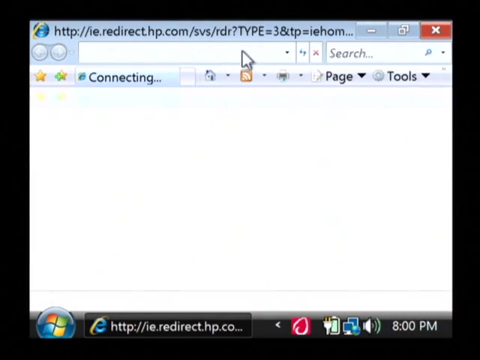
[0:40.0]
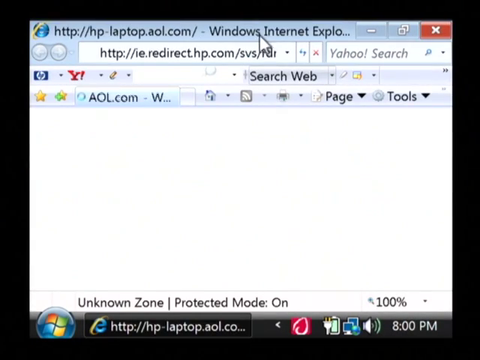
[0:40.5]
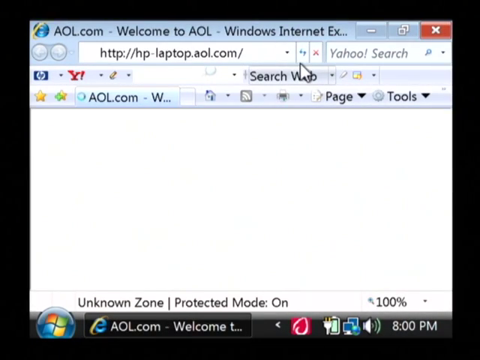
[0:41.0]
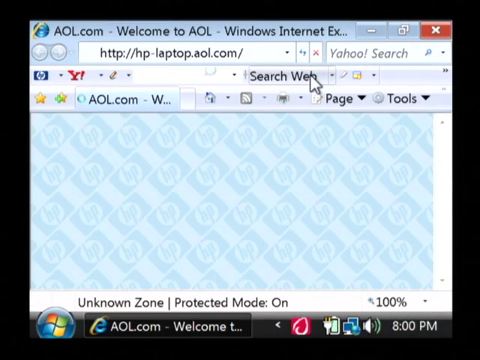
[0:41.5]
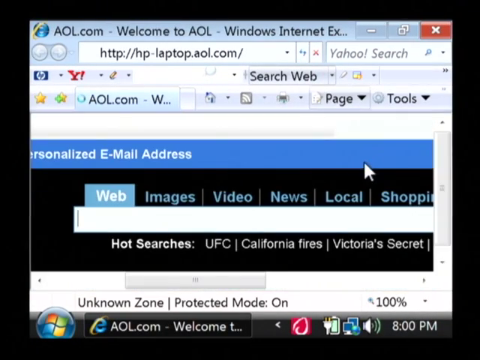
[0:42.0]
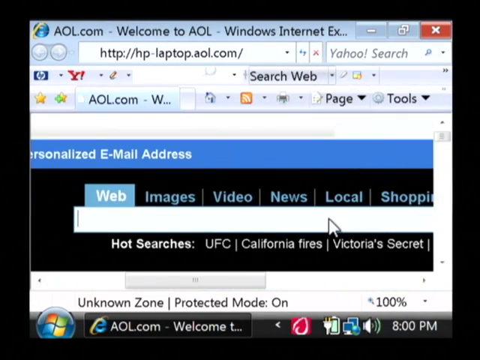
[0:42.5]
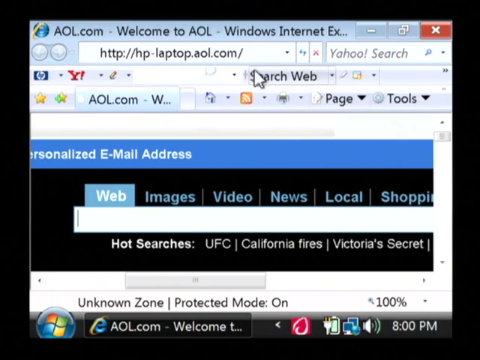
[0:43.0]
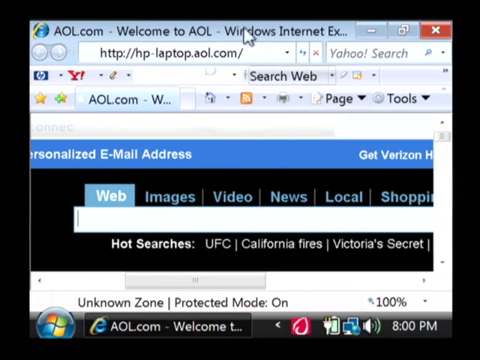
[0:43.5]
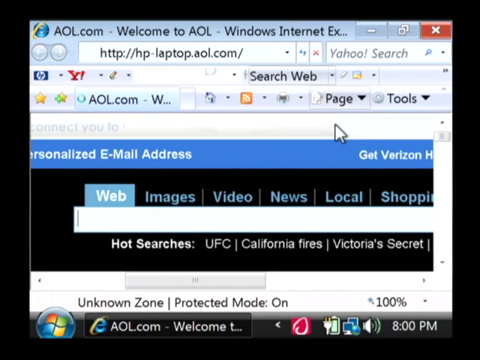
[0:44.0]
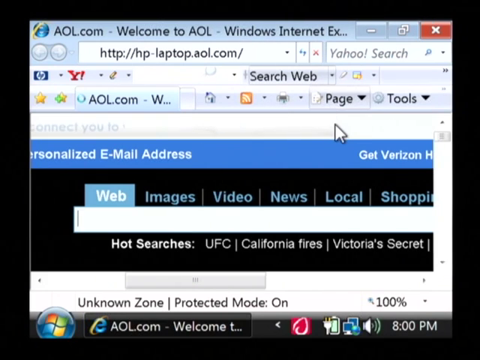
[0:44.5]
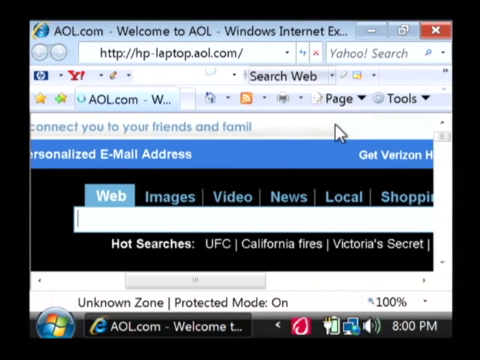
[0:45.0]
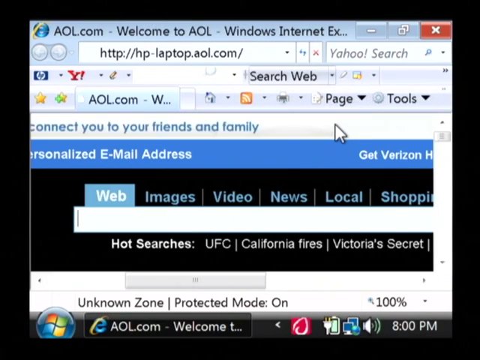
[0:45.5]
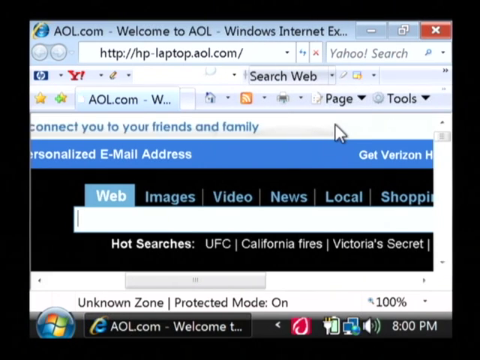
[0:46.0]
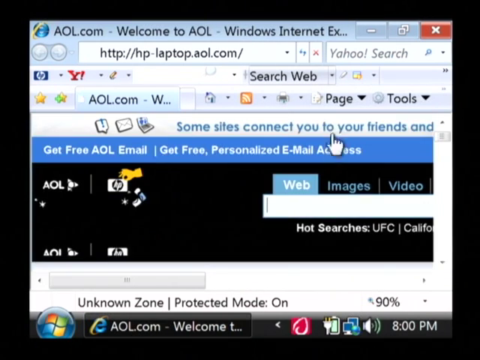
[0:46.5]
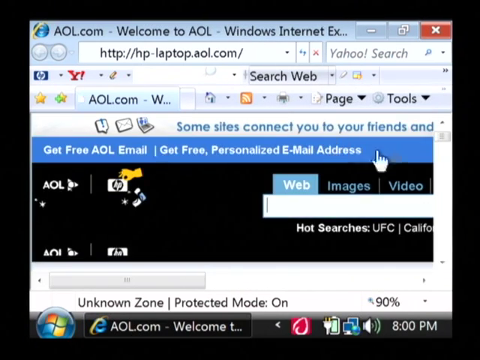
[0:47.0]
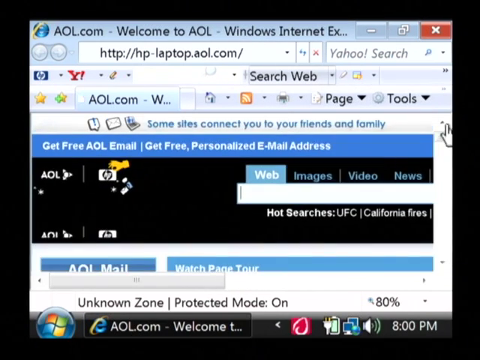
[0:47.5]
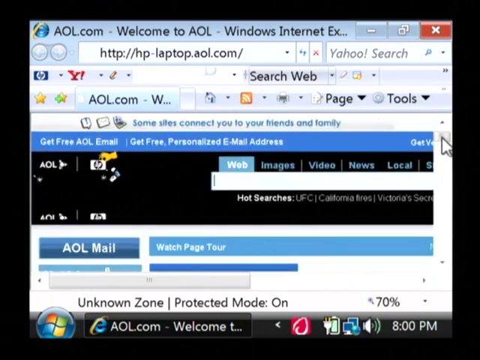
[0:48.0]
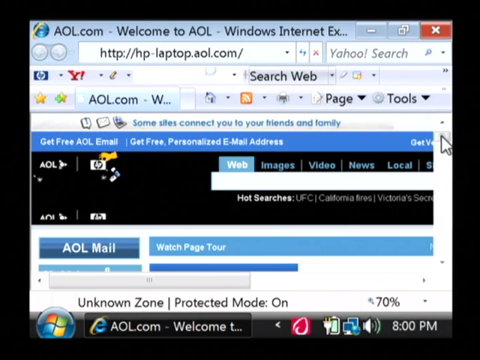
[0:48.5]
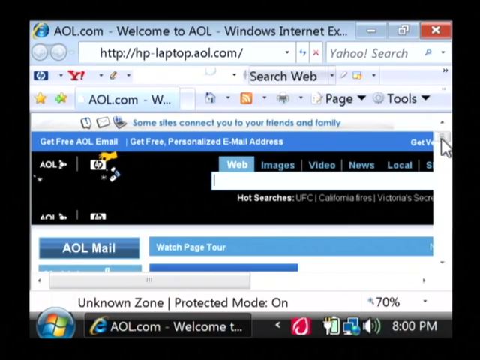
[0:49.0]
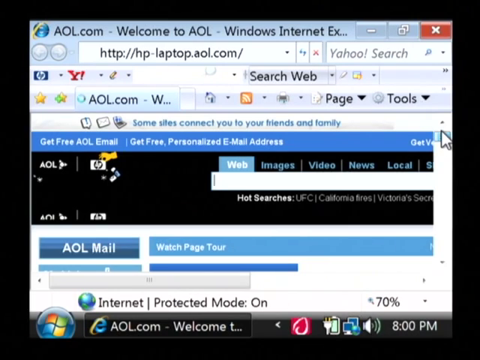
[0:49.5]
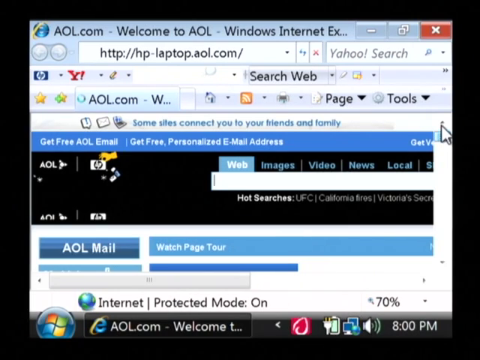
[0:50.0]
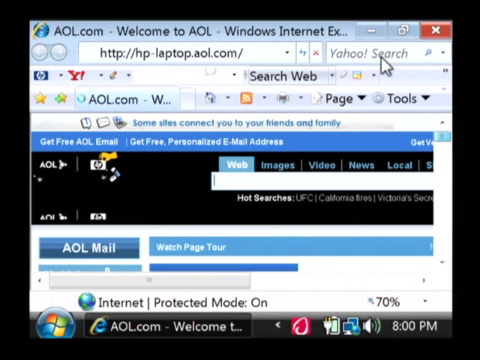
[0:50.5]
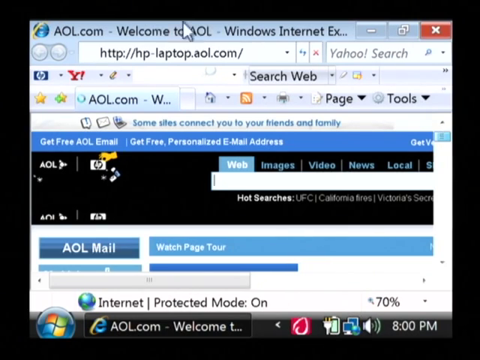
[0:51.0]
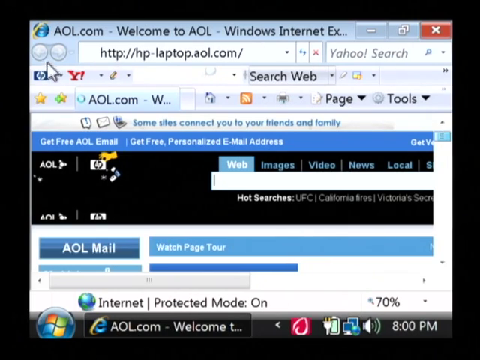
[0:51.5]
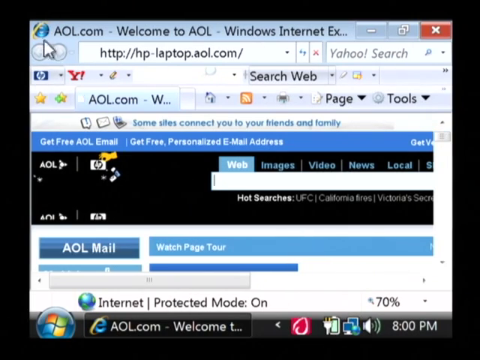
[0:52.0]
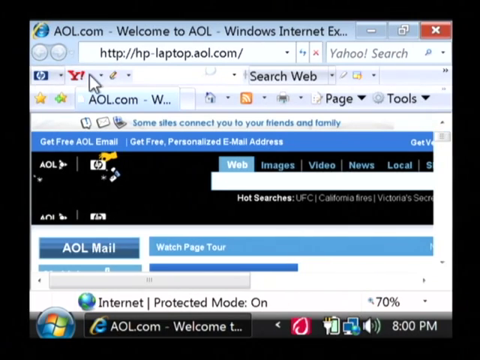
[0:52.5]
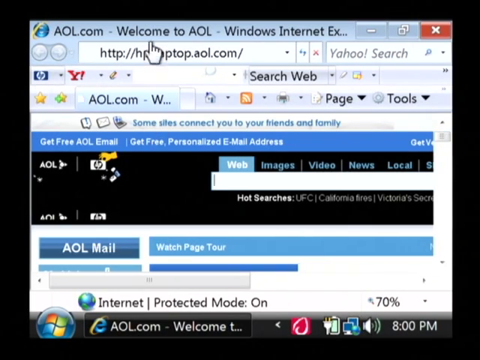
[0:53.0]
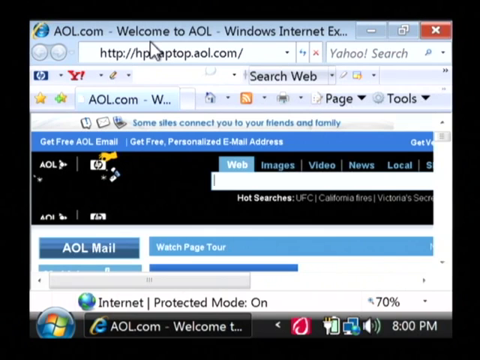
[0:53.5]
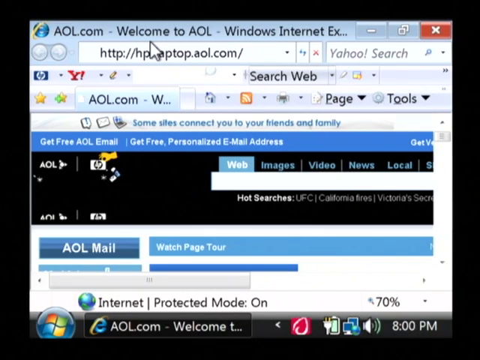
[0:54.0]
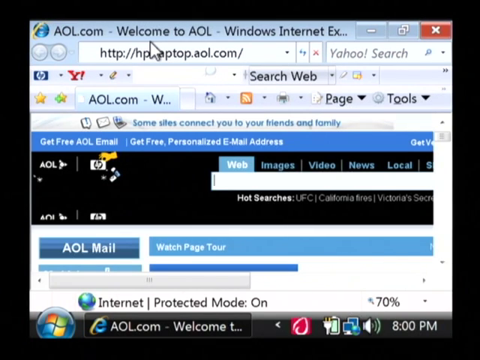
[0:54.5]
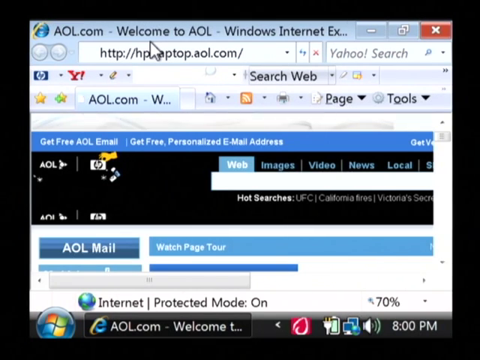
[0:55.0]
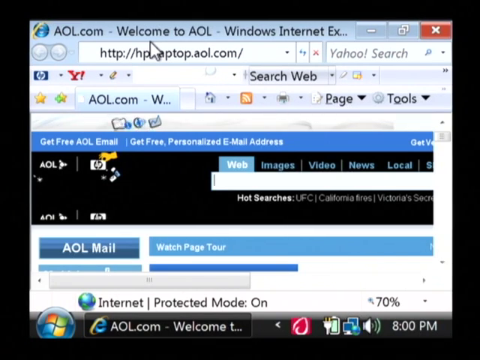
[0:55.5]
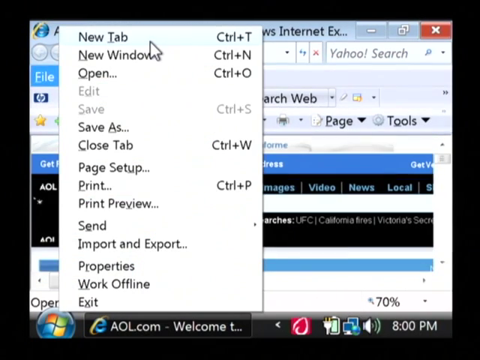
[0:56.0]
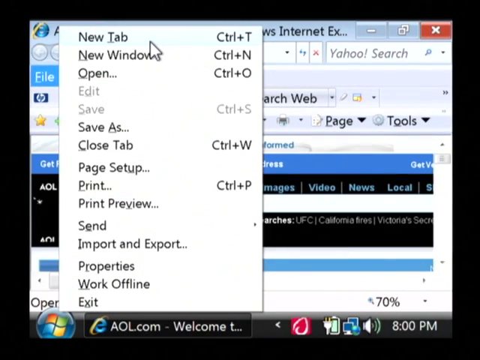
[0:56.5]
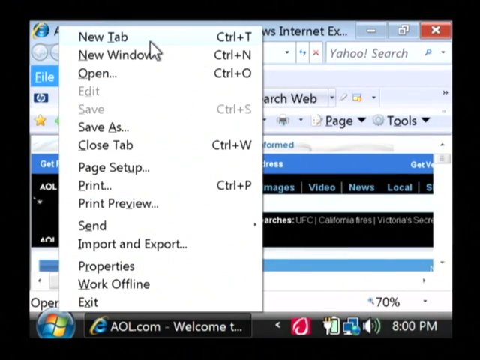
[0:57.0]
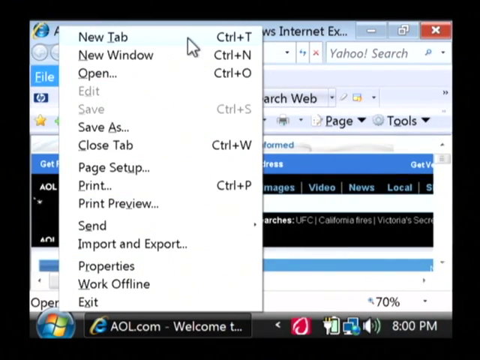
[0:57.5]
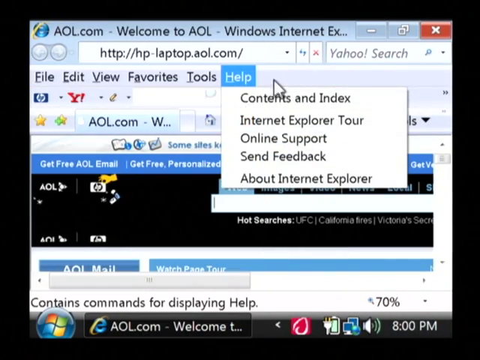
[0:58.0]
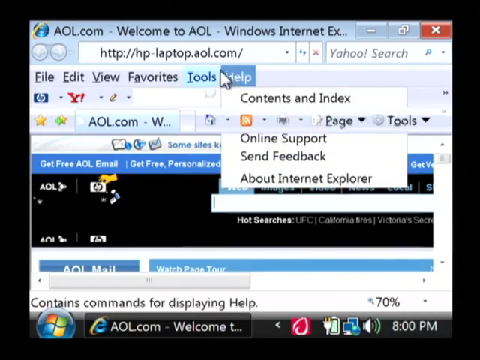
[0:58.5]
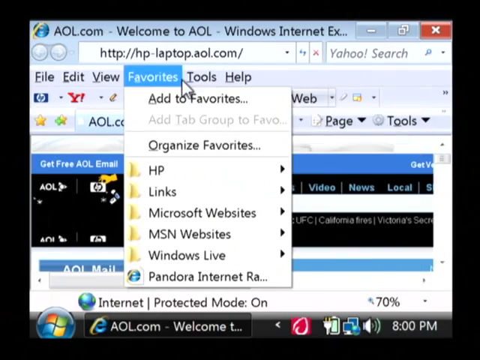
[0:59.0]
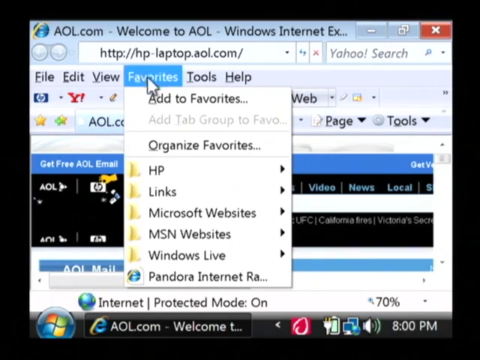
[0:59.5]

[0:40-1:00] After Internet Explorer opens, an HP URL loads but is redirected instantly, and the page loads to hplaptopaol.com. Because the resolution is so small, the user adjusts the magnification down to what seems to be 70%. The browser shows the AOL web page. At first he seems about to open a new tab, but he doesn't; instead he goes back to the menu options, possibly by pressing the Alt key. With the top menu bar open, he goes through the options from right to left, including Help, hovers briefly over Tools, and goes to Favorites.